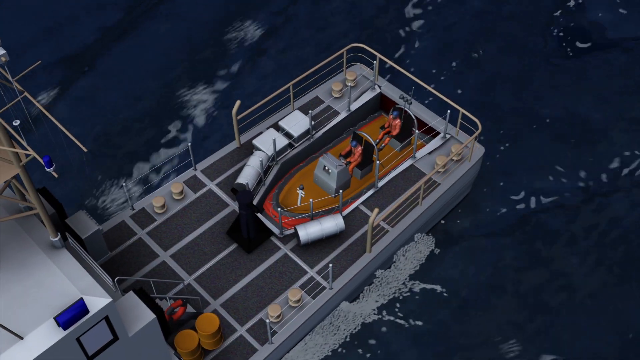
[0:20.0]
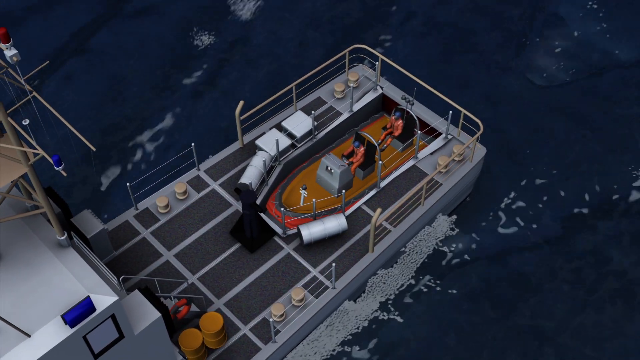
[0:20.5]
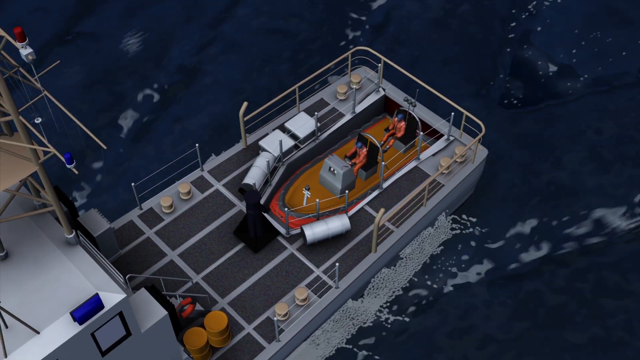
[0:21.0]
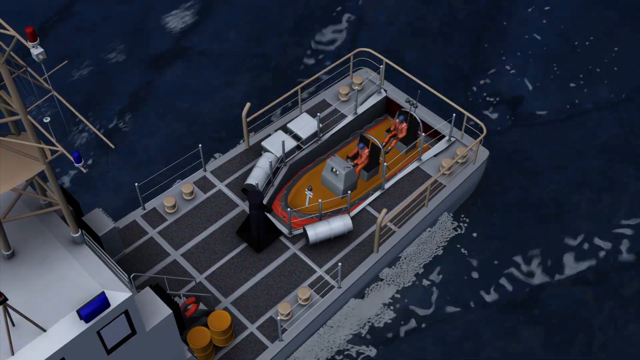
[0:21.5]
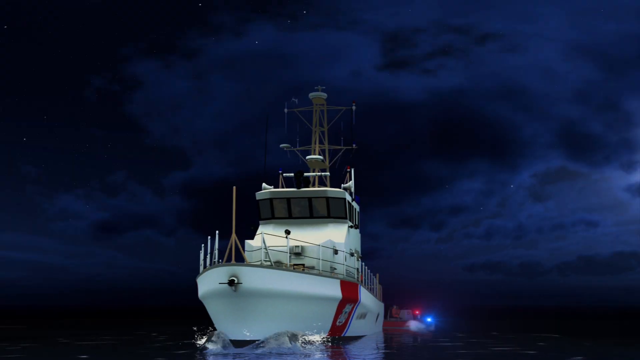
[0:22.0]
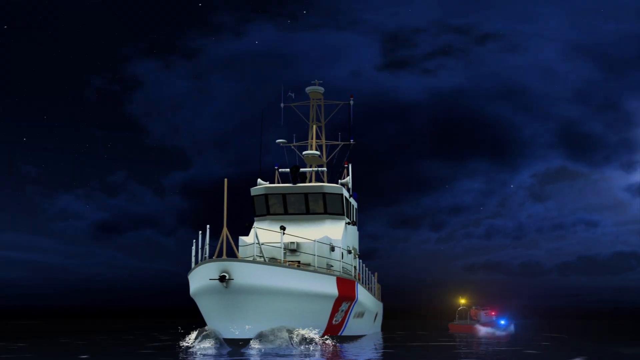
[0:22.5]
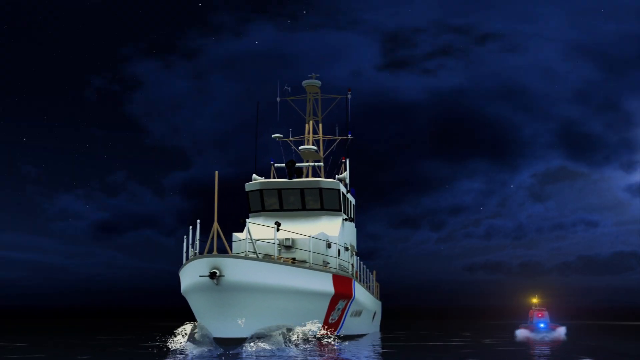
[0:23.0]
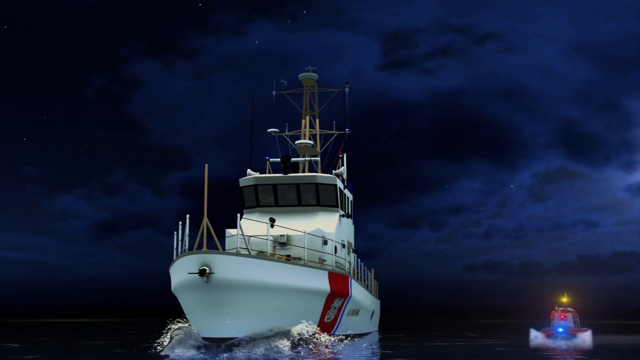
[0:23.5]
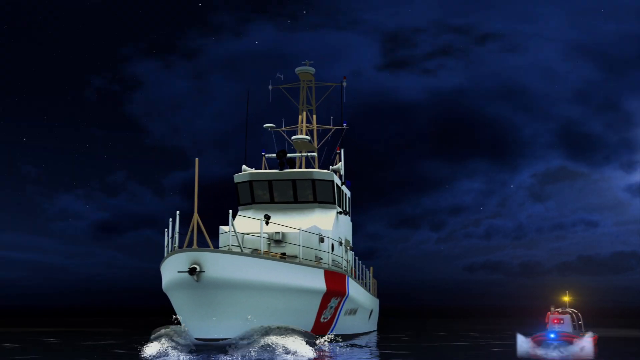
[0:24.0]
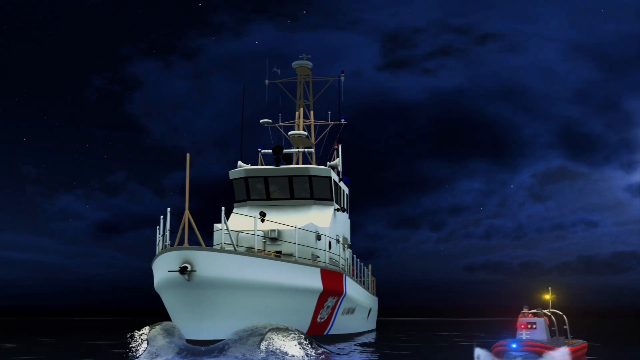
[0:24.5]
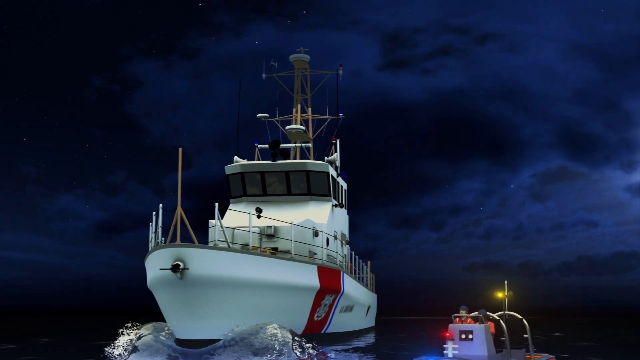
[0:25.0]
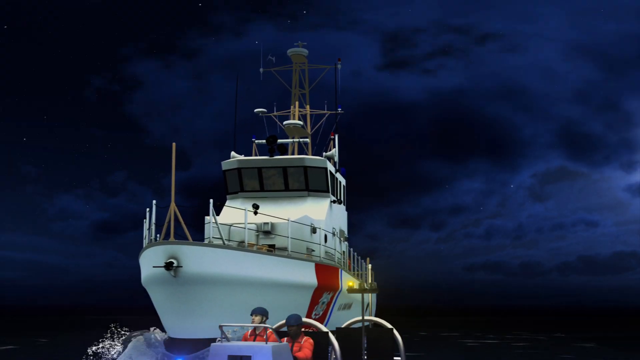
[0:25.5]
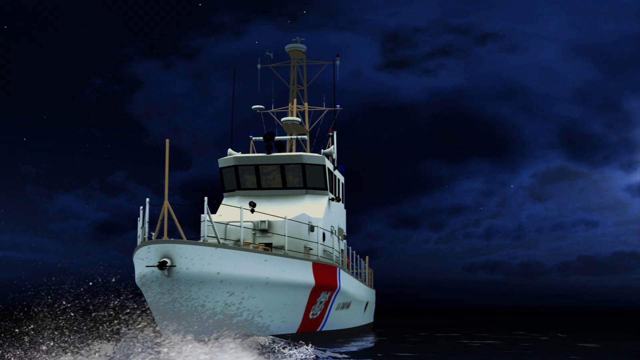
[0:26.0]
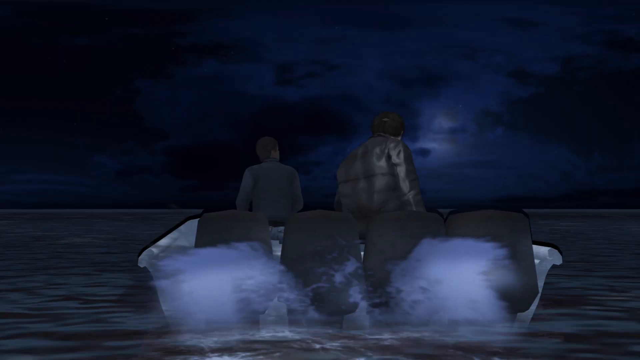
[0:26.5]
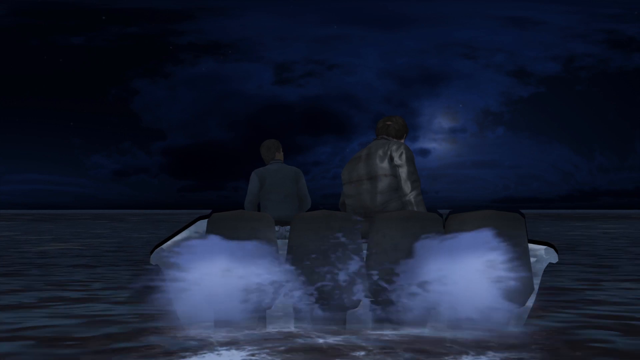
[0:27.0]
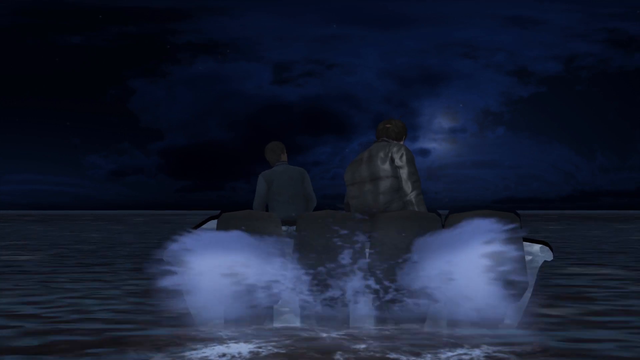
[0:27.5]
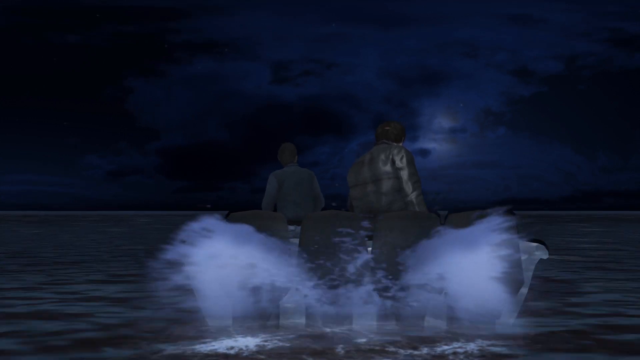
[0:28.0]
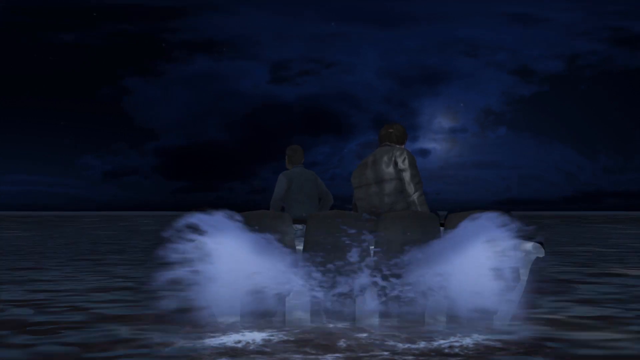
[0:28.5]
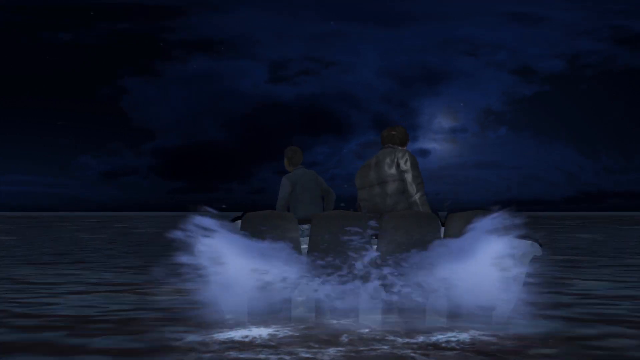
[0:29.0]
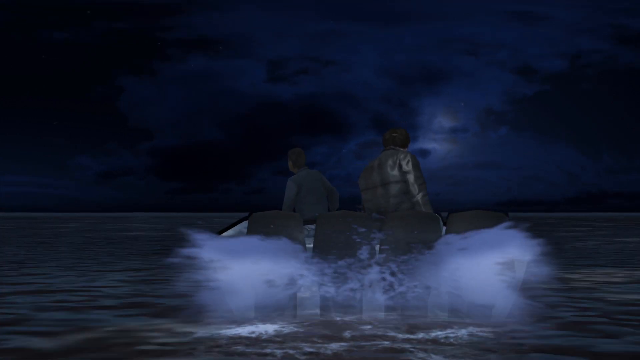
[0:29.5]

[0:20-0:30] Rendered in old-fashioned CGI that looks like it comes from the late 90s or early 2000s, the scene opens on a small gray ship set diagonally toward the bottom left corner of the screen. It is big enough to have an interior and an exterior but not large enough to be a full-sized ship. Two men are seated on the deck; one appears to be in front of a steering apparatus or dashboard, and the other is behind him, also seated, on a black and gray chair. Both wear orange clothing from head to toe. A cut shows the ship moving slowly as the smaller boat carrying the two men in orange comes out to the right, moves around the small ship, and heads forward toward the left and out of the frame. The video then cuts to a small motorized boat with two men in black jackets. A kind of outboard motor appears to be on the boat, spraying water behind it as the boat moves through the water.